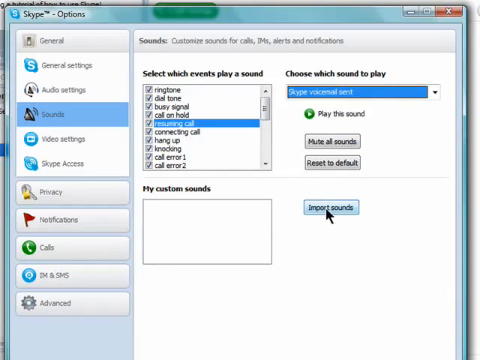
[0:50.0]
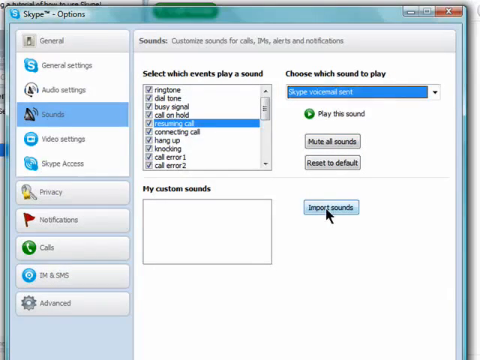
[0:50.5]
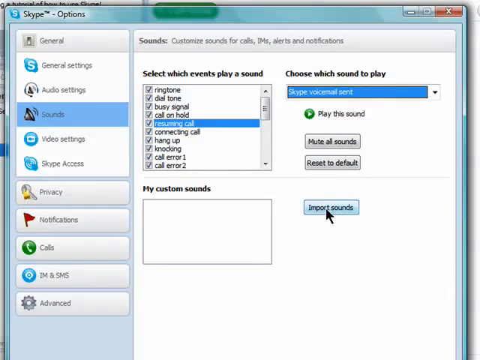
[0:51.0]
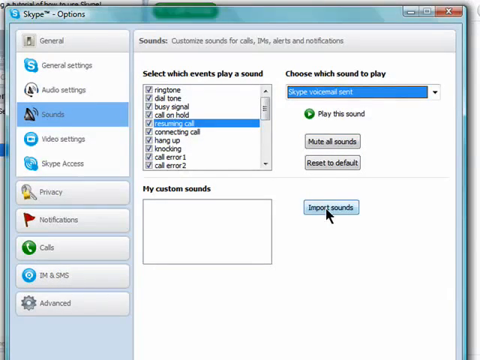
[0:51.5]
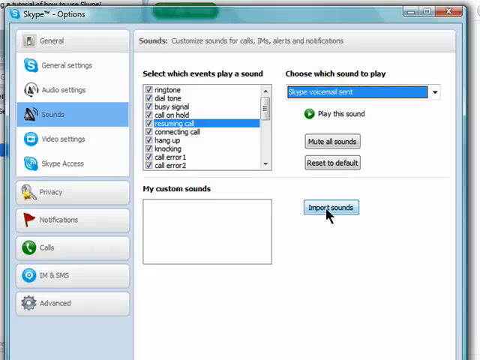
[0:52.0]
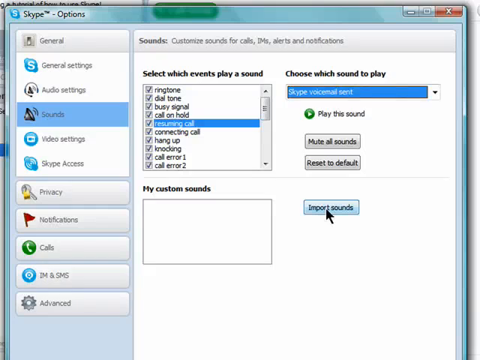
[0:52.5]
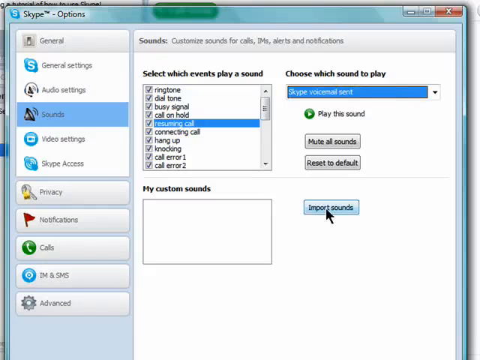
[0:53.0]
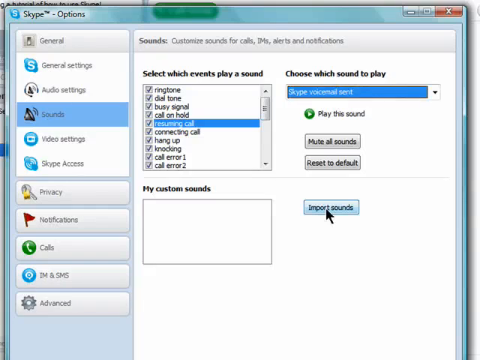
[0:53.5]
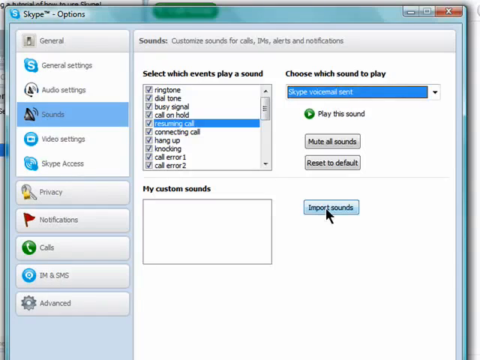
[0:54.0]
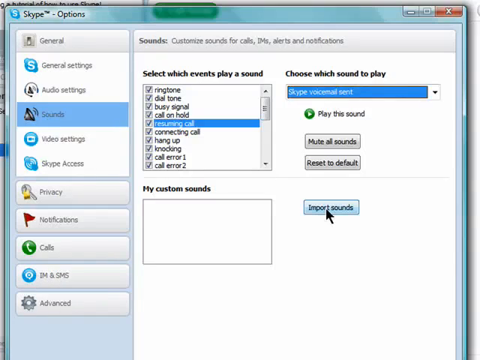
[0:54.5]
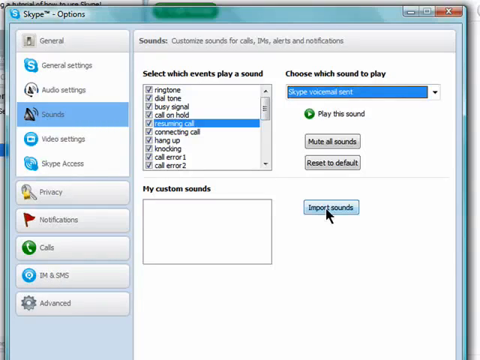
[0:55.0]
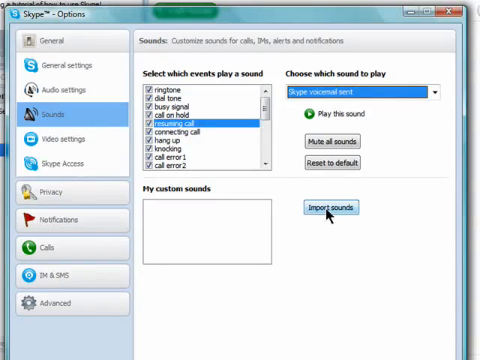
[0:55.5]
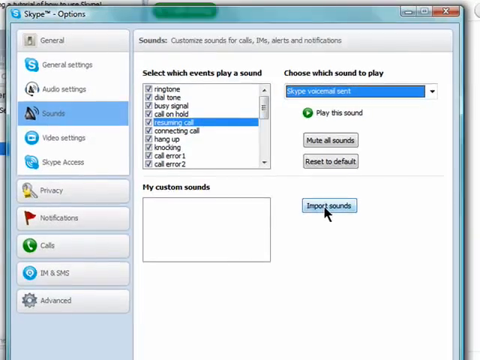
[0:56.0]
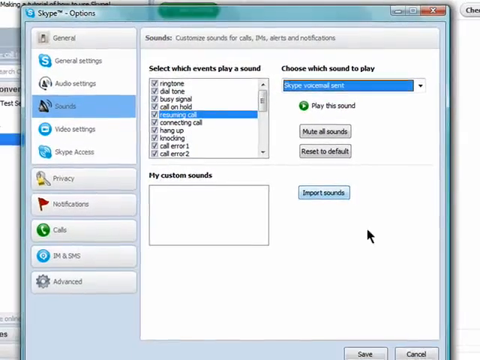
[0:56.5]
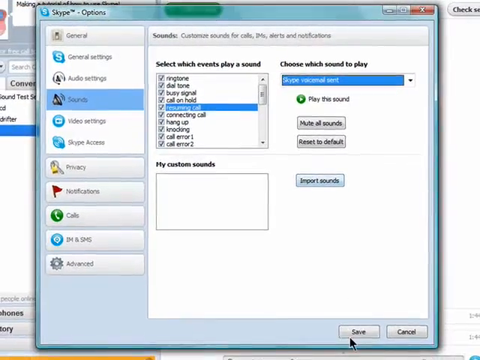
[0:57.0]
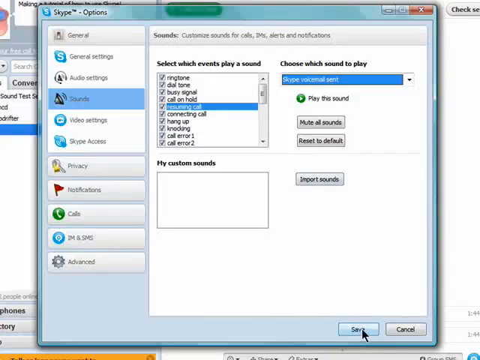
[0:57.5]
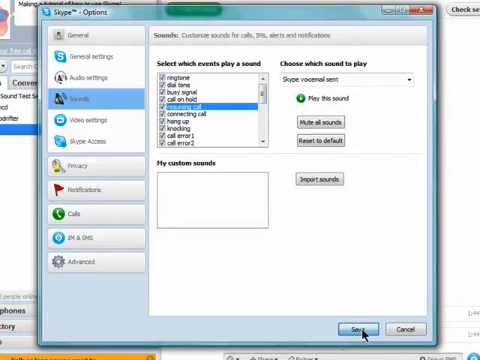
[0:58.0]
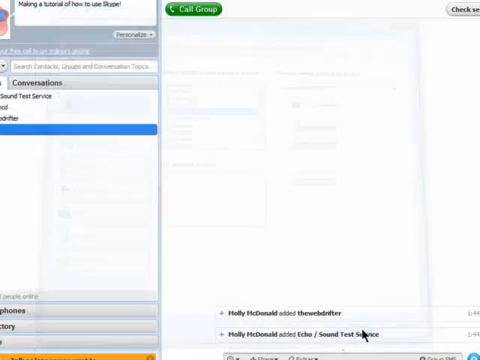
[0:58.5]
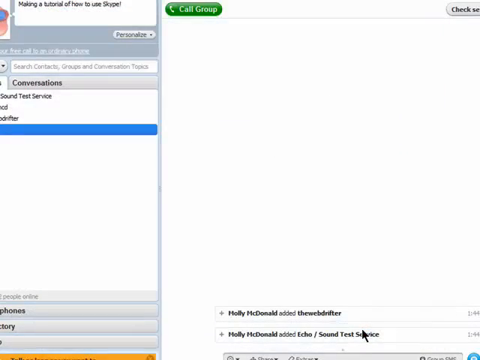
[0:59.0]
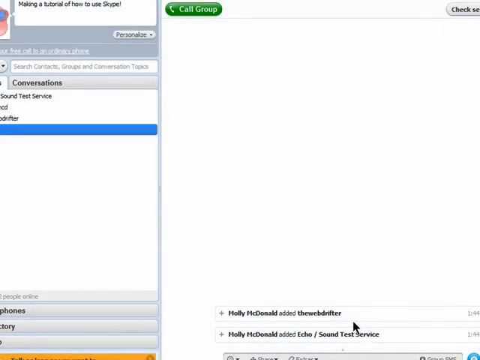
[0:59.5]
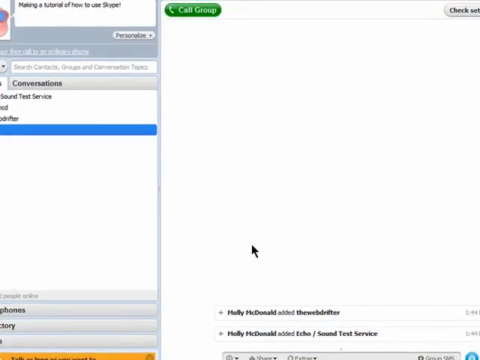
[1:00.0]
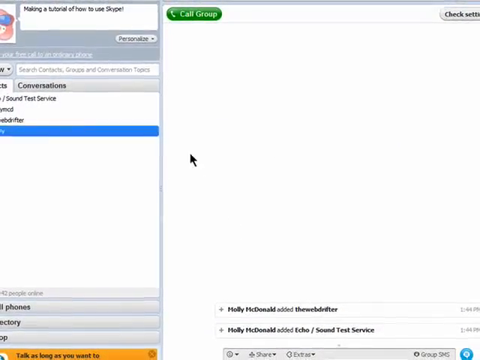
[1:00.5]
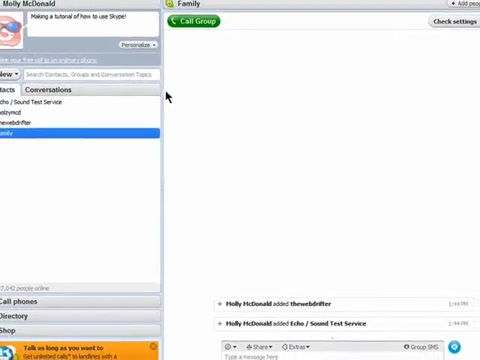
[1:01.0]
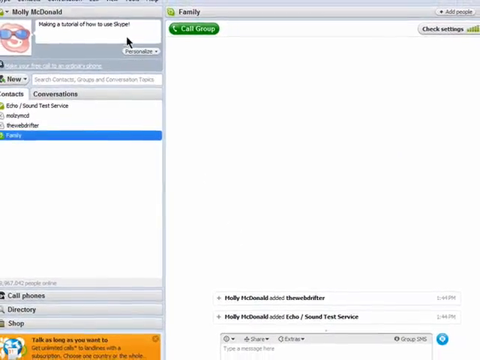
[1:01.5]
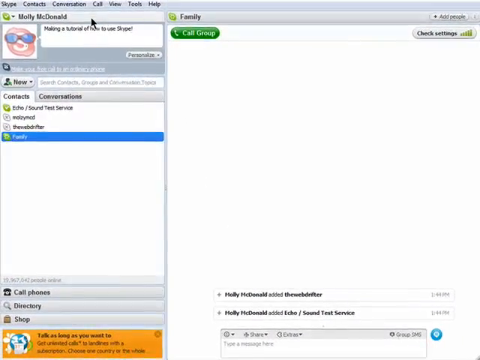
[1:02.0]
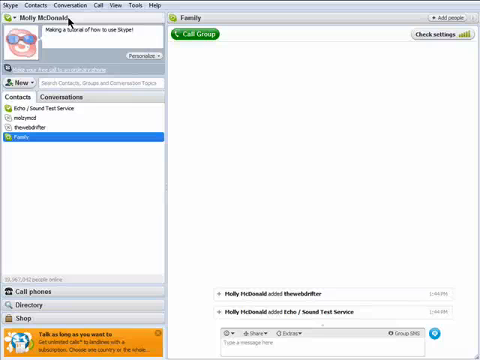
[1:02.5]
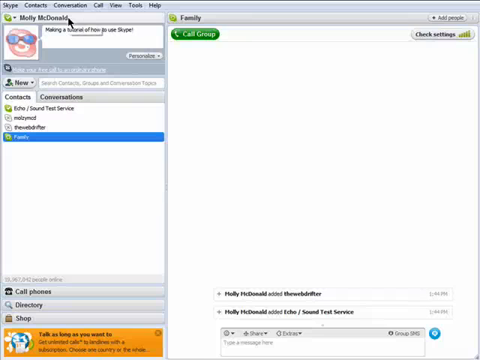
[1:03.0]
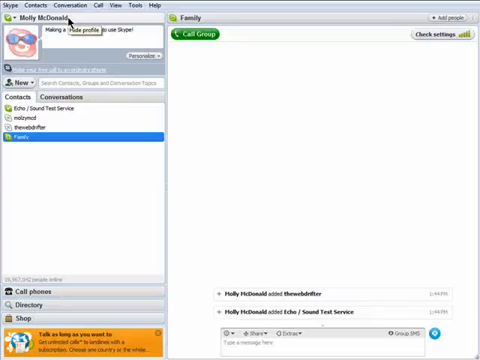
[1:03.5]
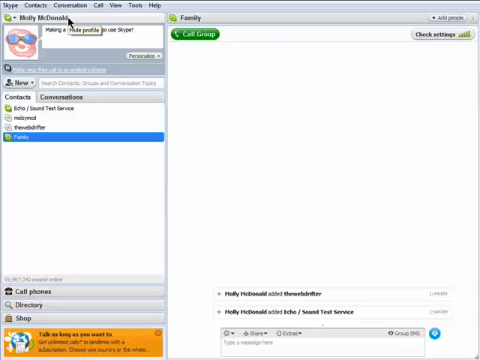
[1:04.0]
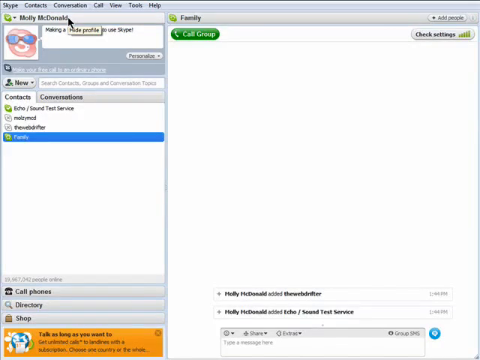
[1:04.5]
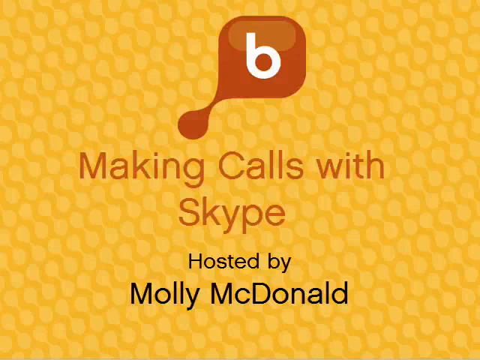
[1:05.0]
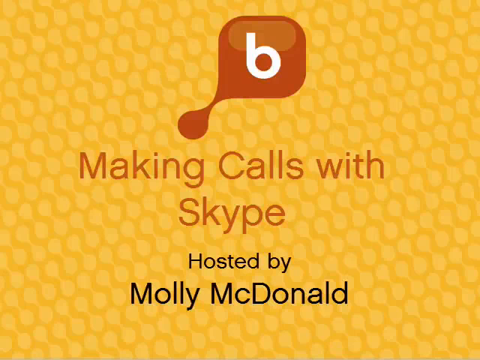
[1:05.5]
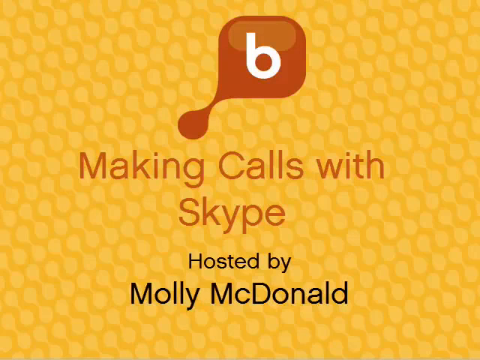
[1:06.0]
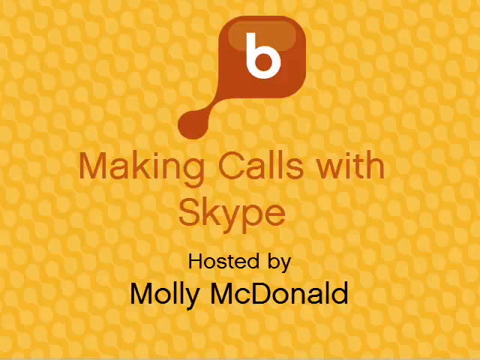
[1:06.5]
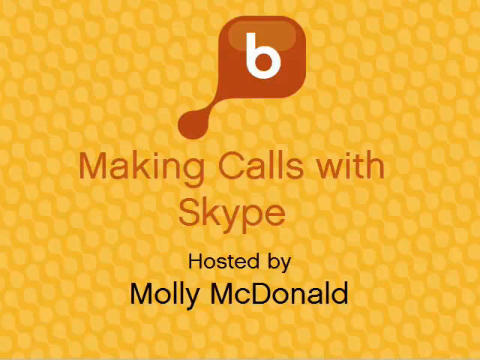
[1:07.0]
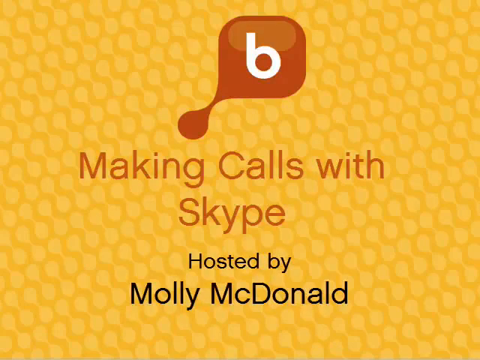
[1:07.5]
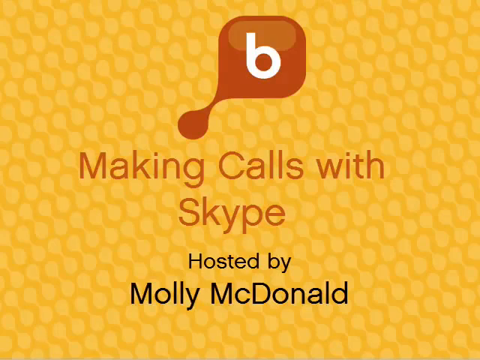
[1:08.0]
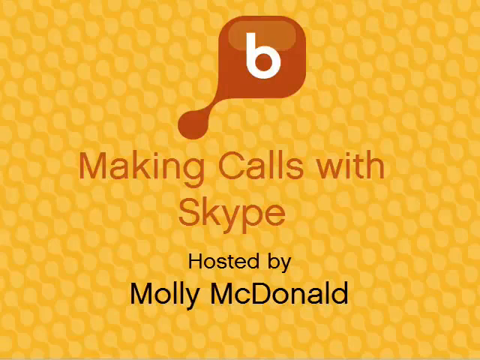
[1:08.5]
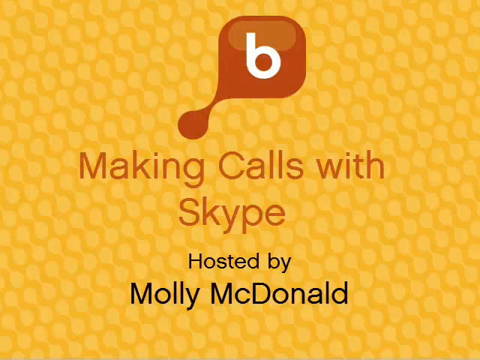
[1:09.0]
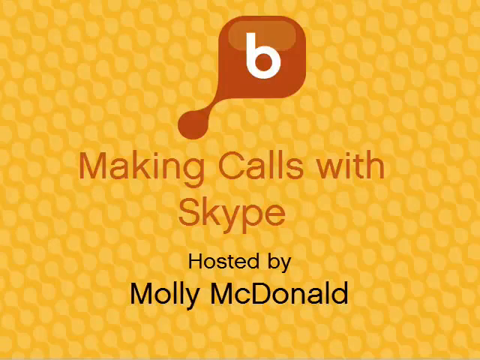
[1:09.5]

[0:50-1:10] The black arrow cursor hangs around "Import sounds" and then drops down a bit. As it does, the overall screen gets larger, as though the view is moving away from it to give a better view. The cursor clicks a button at the bottom that says "Save", and the whole window closes, returning to the initial computer screen with Molly McDonald in the upper left. That closes as well, returning to the sort of honeycomb screen, which now has different words. It still has the "b" logo at the top on the caramel background. In the same caramel font it says "Making Calls with Skype", and beneath that, in black, "Hosted by", with "Molly McDonald" on its own line, all against the kind of two-tone yellow honeycomb background.